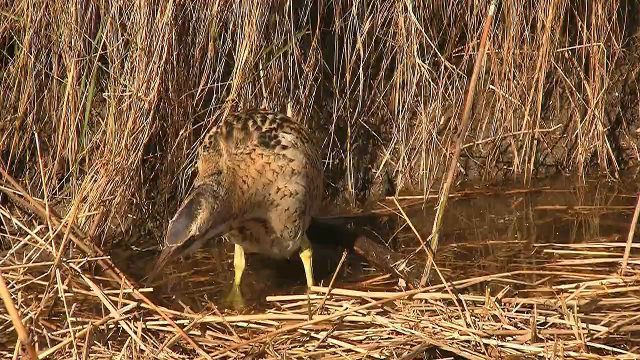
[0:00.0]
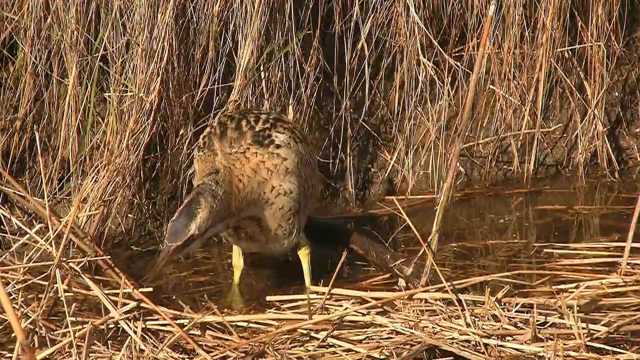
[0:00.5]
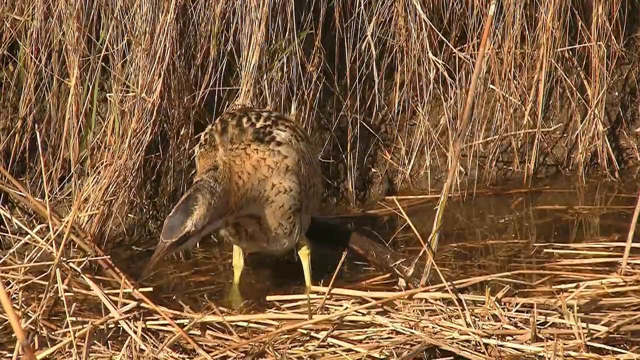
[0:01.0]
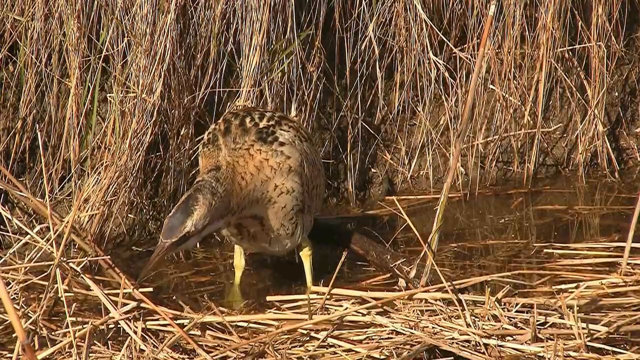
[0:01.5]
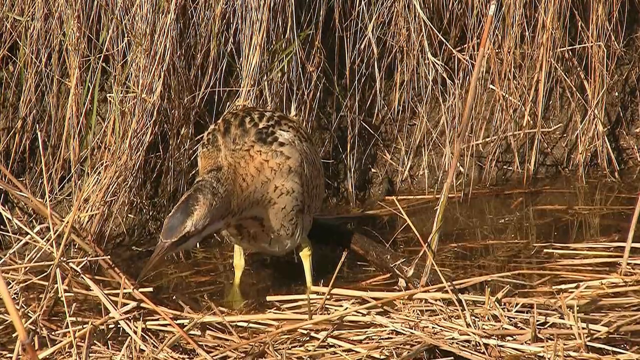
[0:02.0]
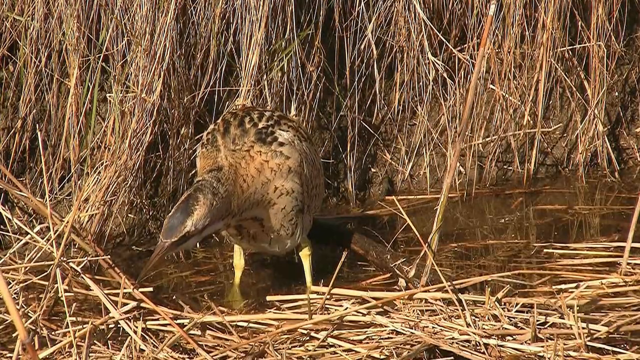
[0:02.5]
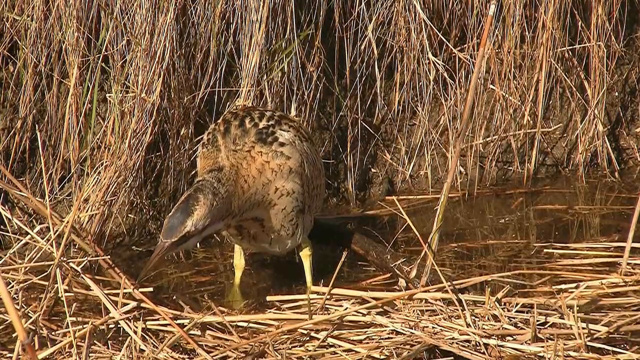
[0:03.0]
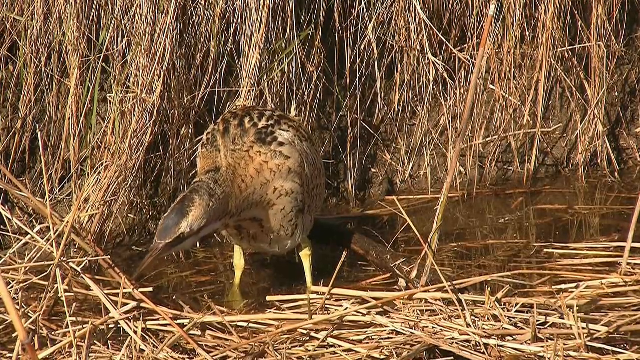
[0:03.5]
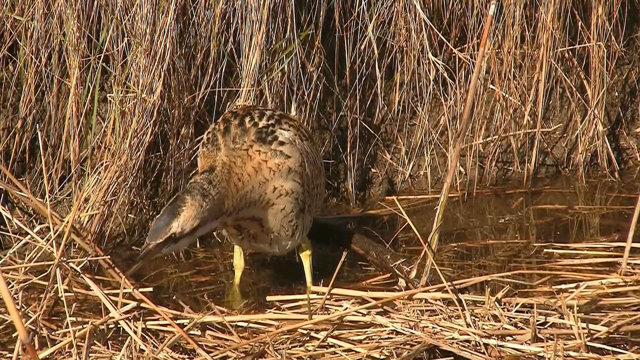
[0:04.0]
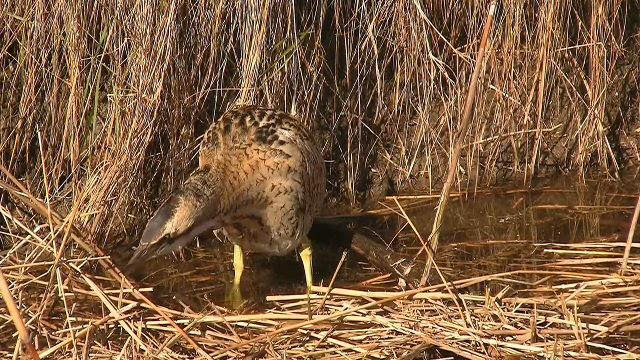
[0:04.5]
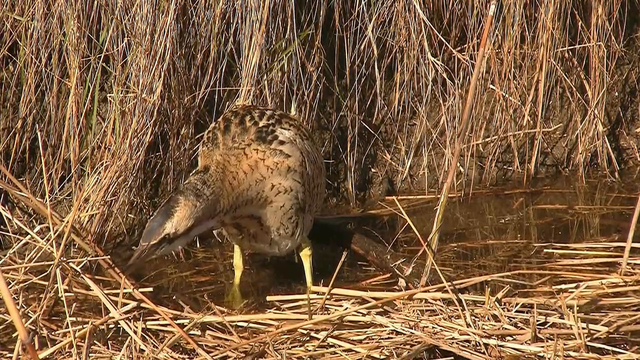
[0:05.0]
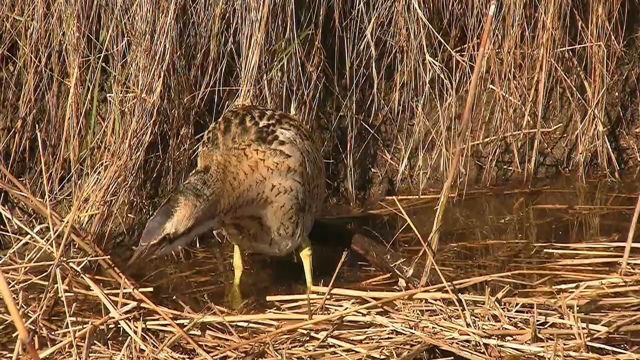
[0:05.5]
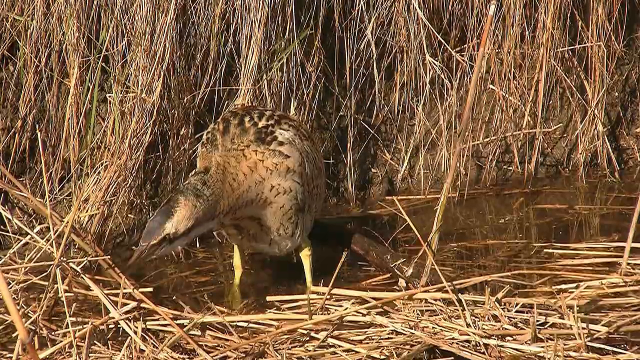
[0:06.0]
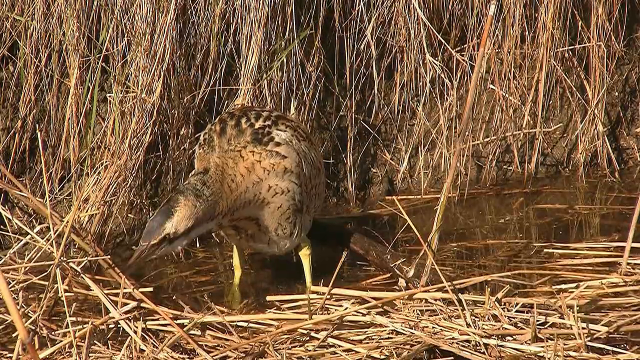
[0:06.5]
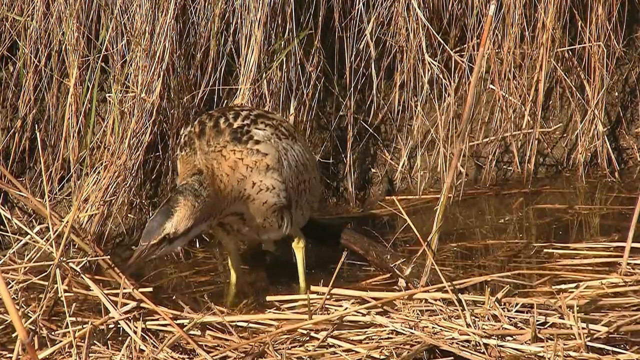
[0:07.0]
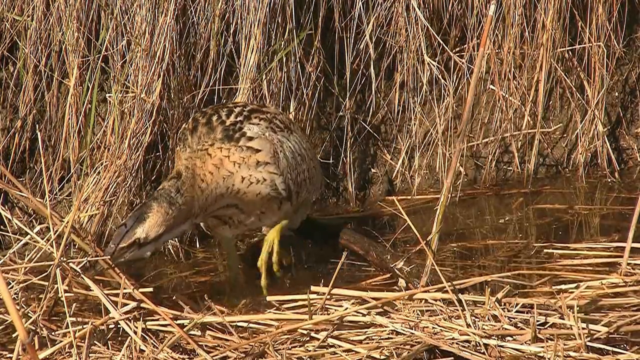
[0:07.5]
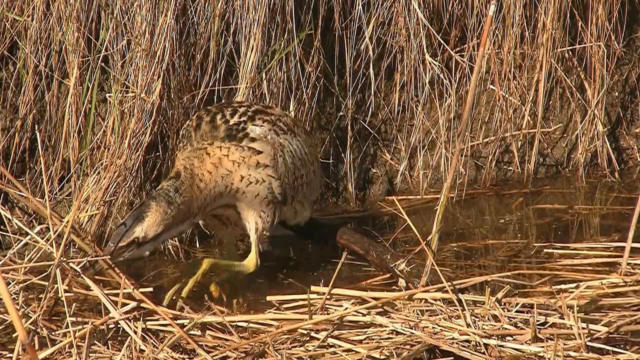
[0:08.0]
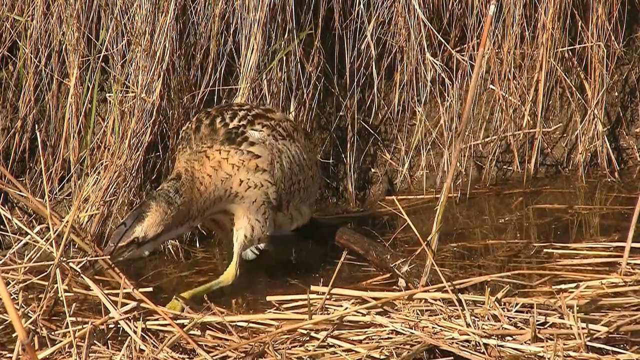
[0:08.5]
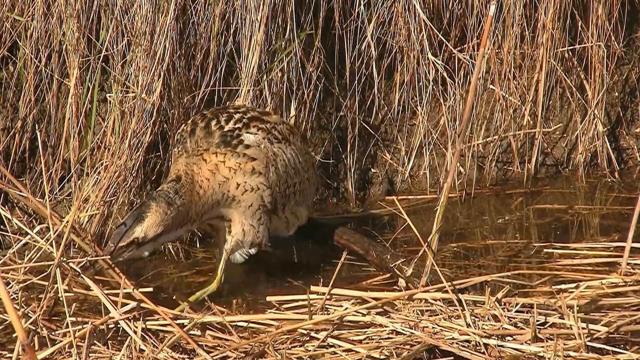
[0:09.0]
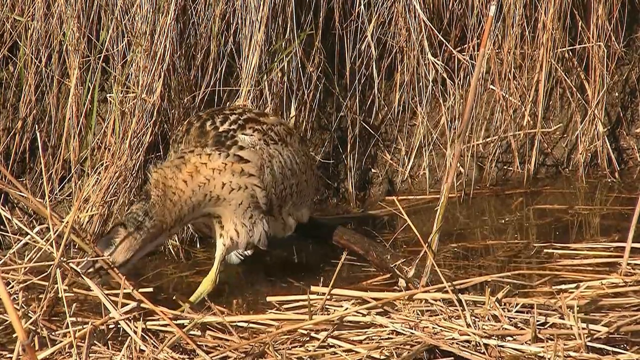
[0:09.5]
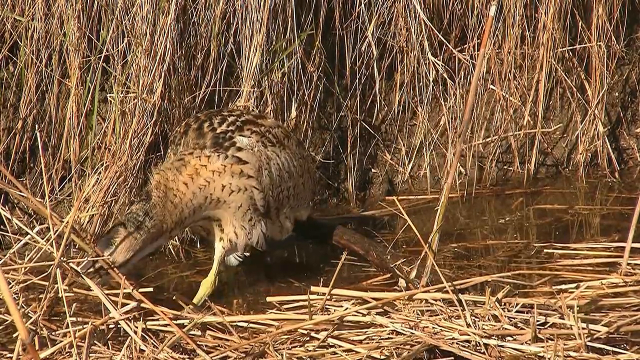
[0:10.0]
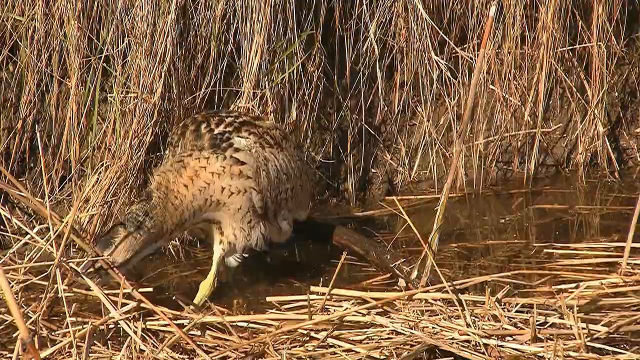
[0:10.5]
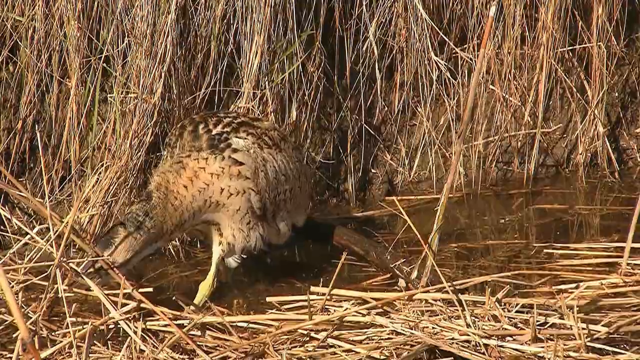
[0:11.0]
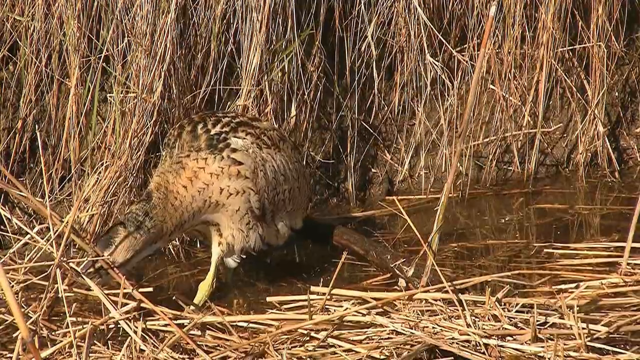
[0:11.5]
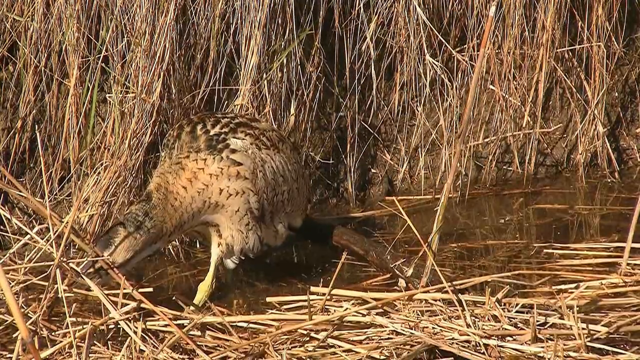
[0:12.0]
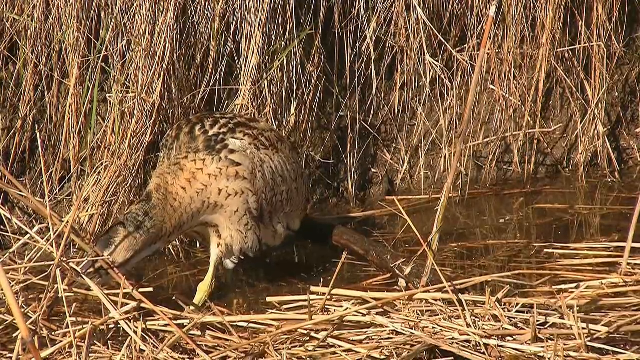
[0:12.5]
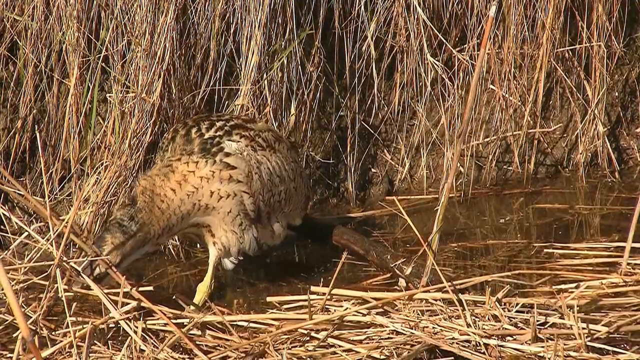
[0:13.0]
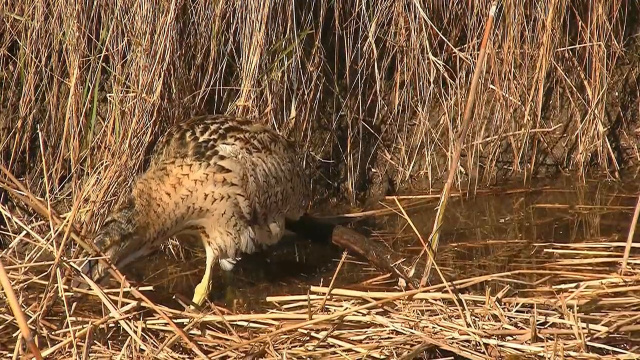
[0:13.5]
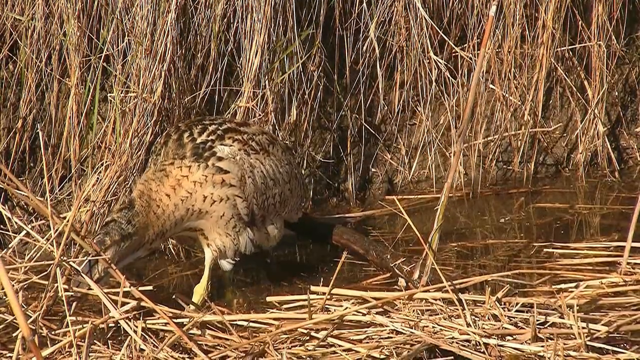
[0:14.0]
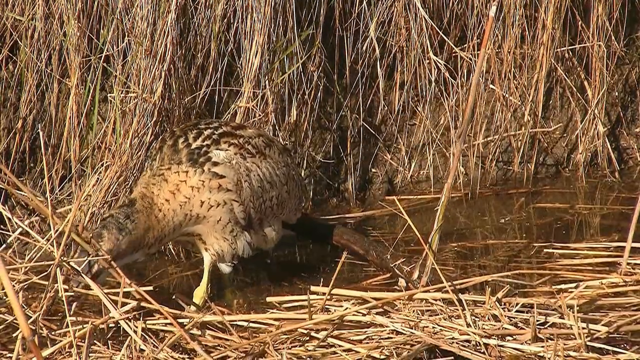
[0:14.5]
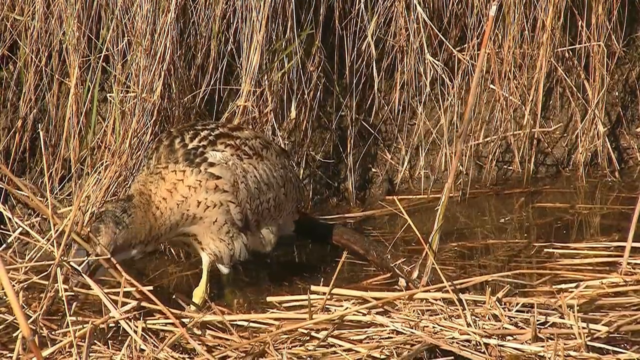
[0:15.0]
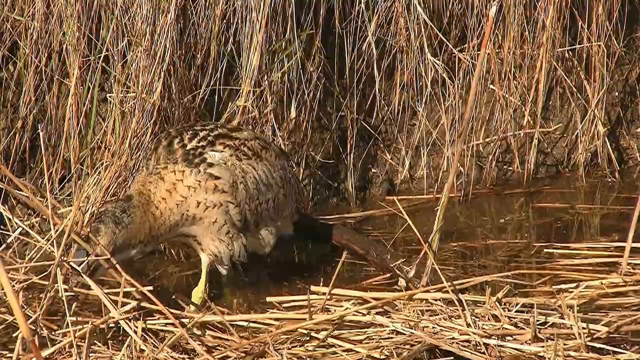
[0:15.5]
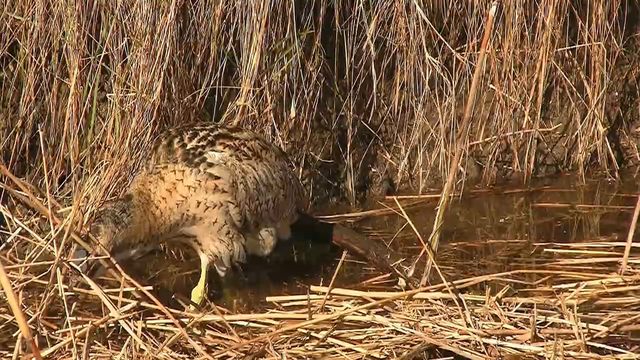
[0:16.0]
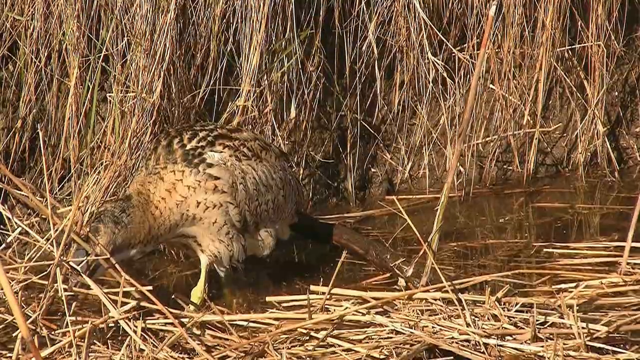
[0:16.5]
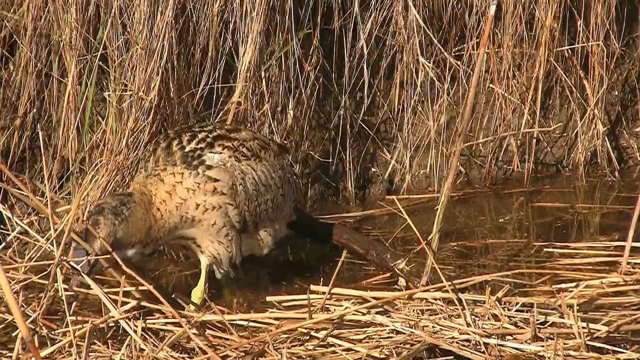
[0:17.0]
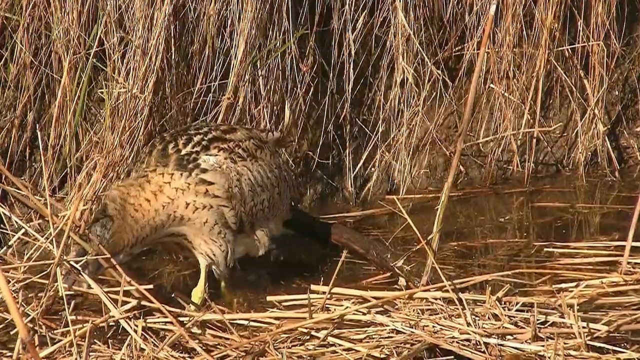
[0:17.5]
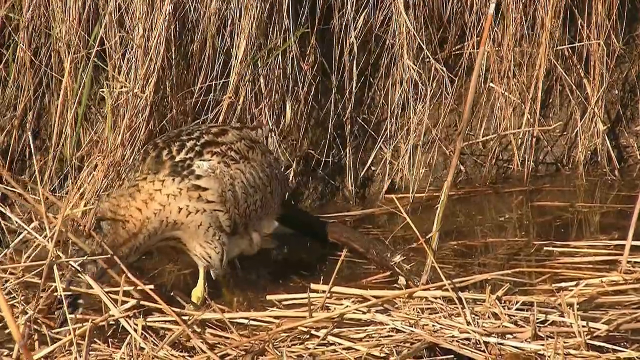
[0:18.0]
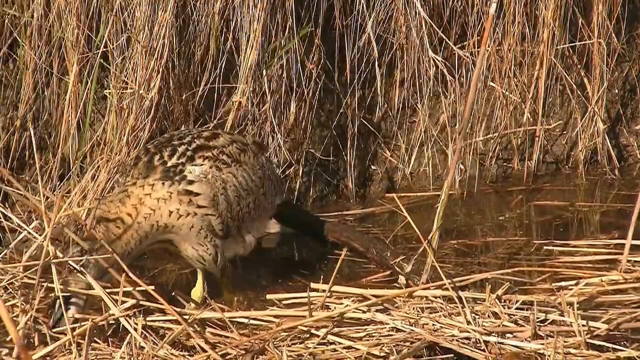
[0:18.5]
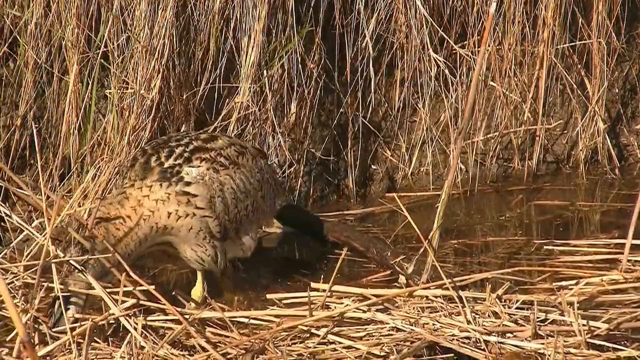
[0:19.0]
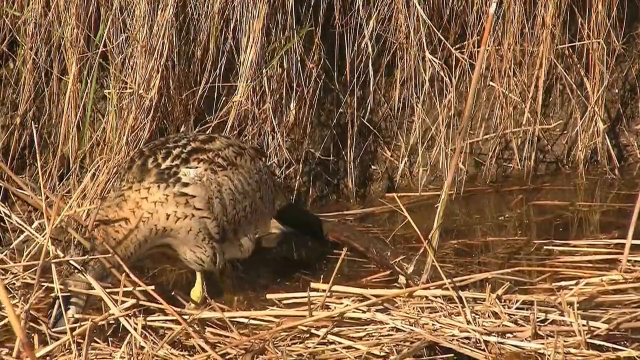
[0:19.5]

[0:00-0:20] A bittern, a type of heron, waits in the water searching for something to eat, bent over and poking its head into the grass. It has a black head, with beige feathers scattered throughout its body; other feathers are black or white. Its legs are yellow. It is standing in water several inches deep, about a foot or two away from the shore, and is very focused on hunting for prey, likely a small fish, frog, snake or crustacean. The shore is filled with grasses and stalks a couple of feet tall; the stalks are beige, with some green ones. It is daytime. The water is brown and murky, with a lot of grass stalks floating on the surface.